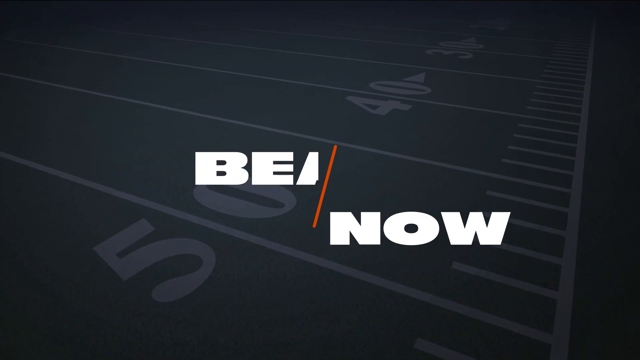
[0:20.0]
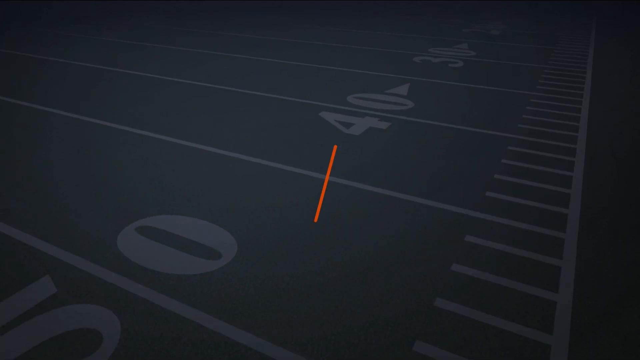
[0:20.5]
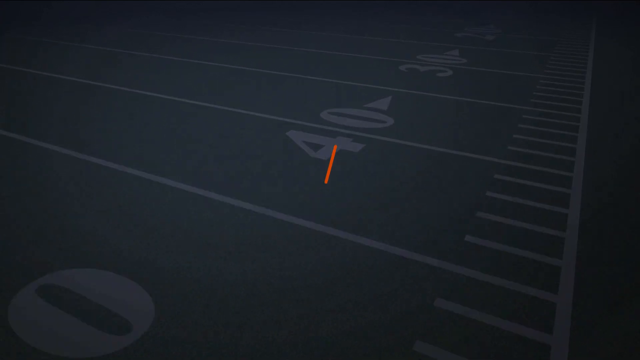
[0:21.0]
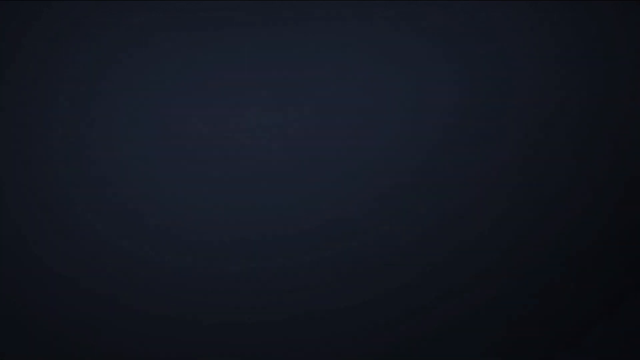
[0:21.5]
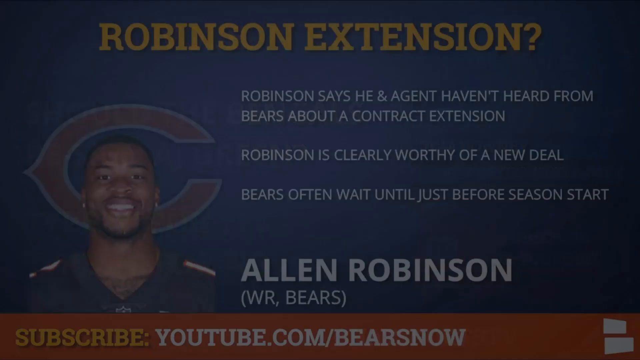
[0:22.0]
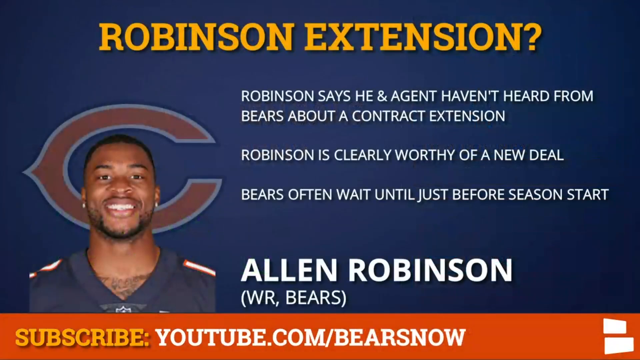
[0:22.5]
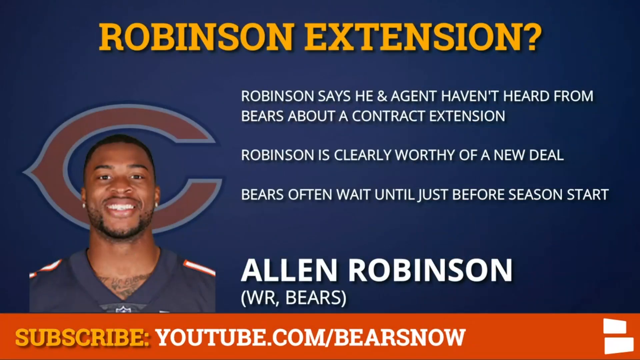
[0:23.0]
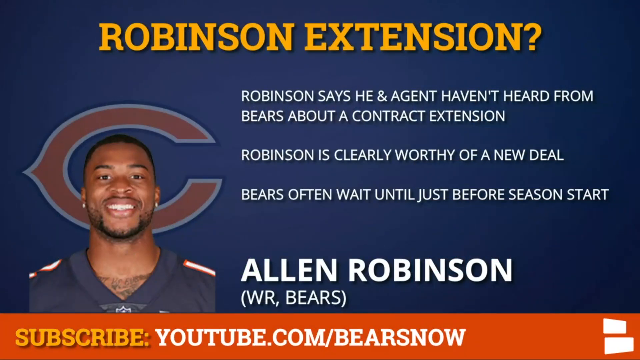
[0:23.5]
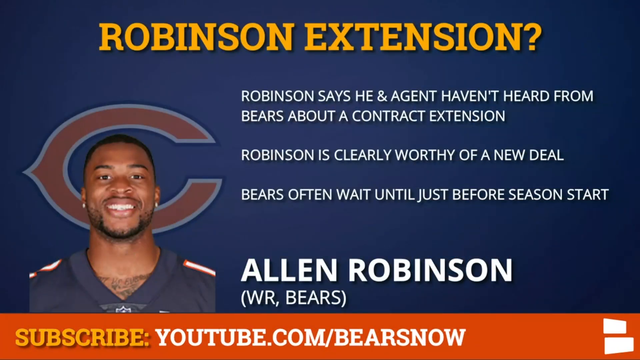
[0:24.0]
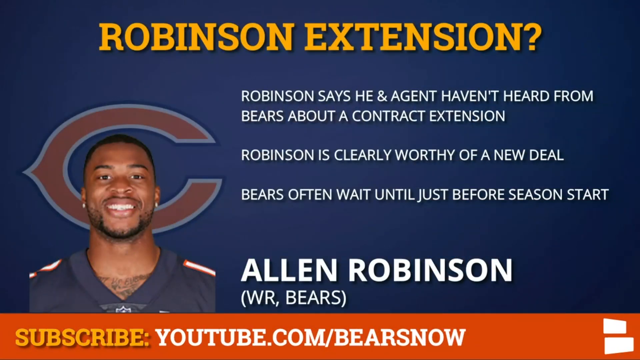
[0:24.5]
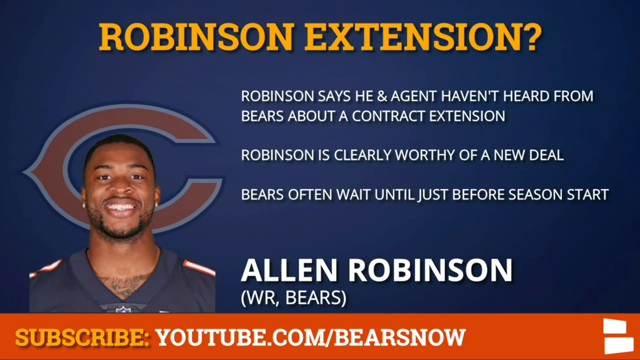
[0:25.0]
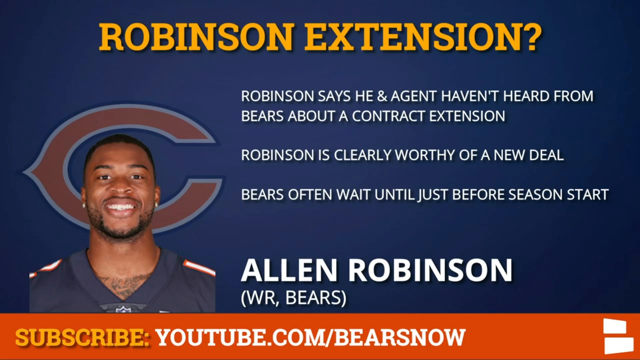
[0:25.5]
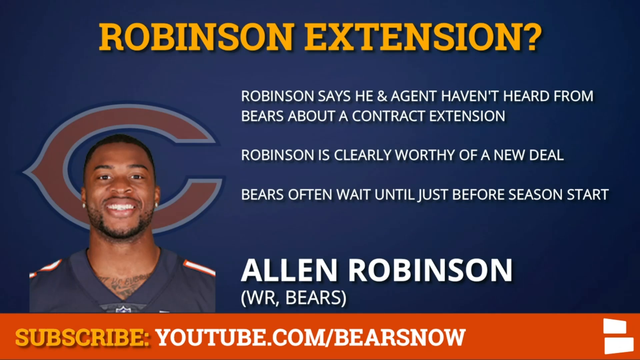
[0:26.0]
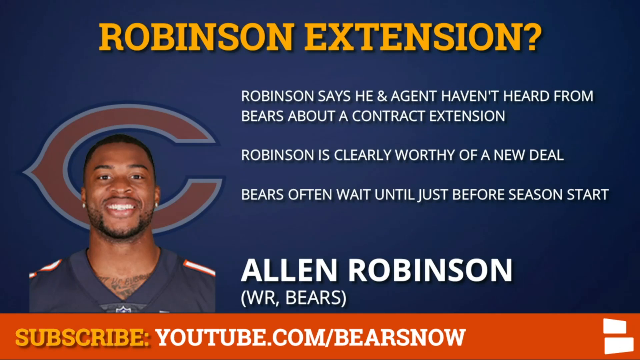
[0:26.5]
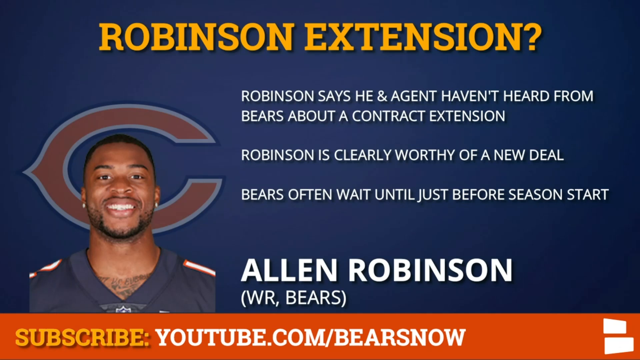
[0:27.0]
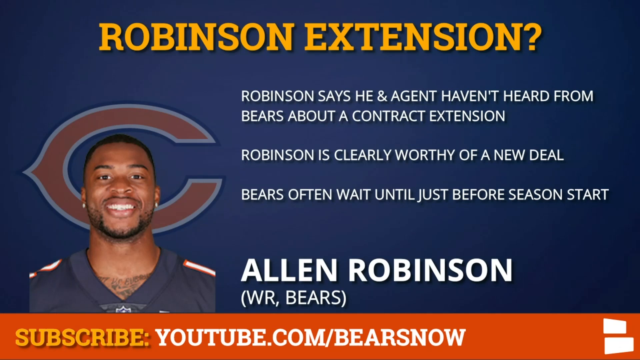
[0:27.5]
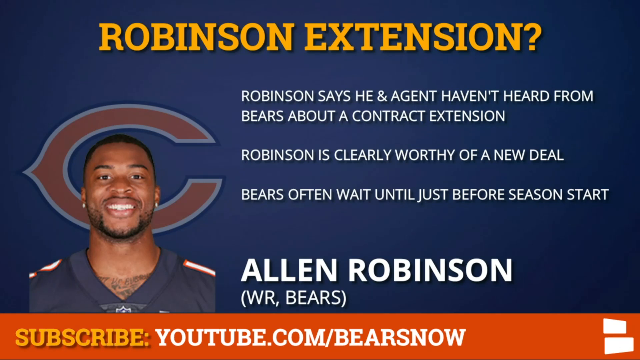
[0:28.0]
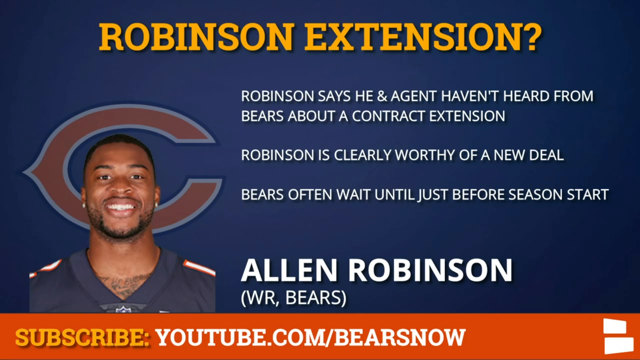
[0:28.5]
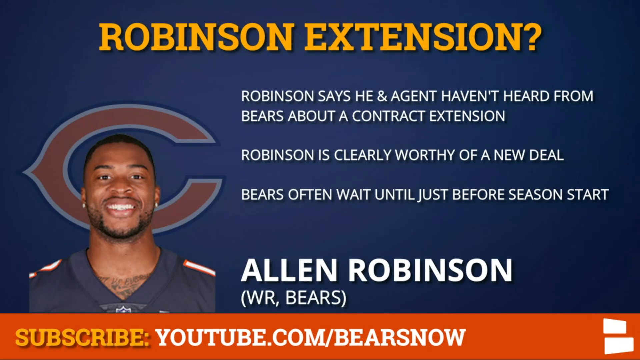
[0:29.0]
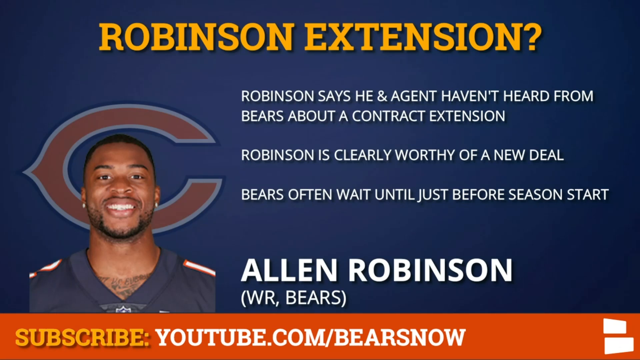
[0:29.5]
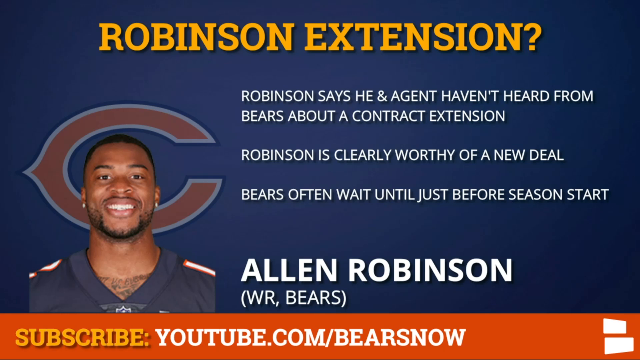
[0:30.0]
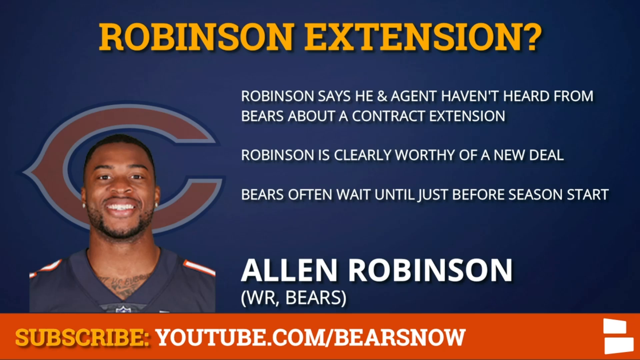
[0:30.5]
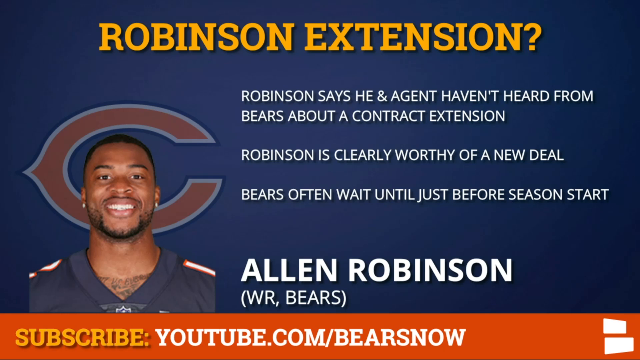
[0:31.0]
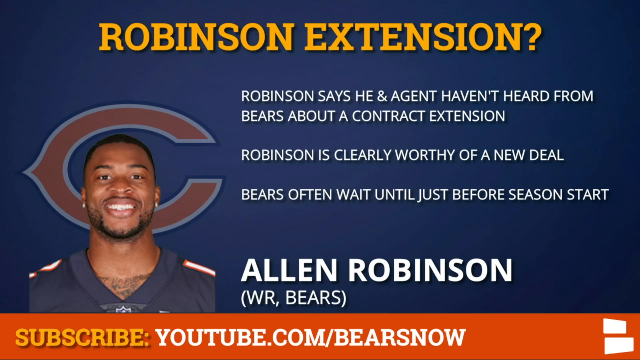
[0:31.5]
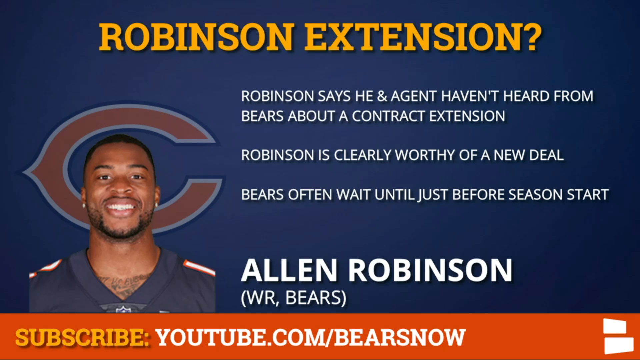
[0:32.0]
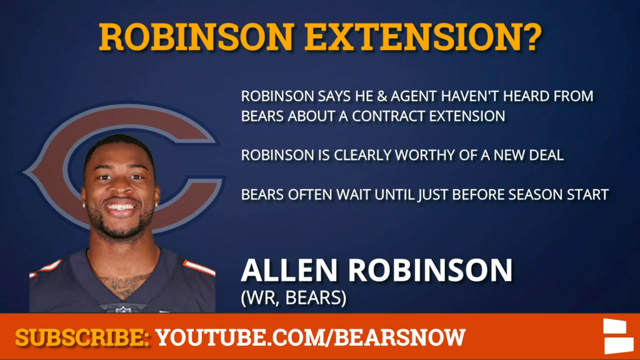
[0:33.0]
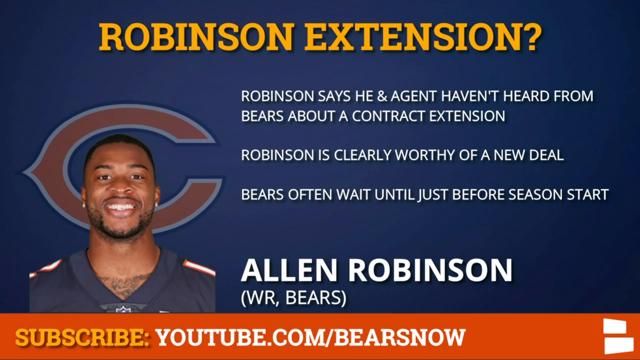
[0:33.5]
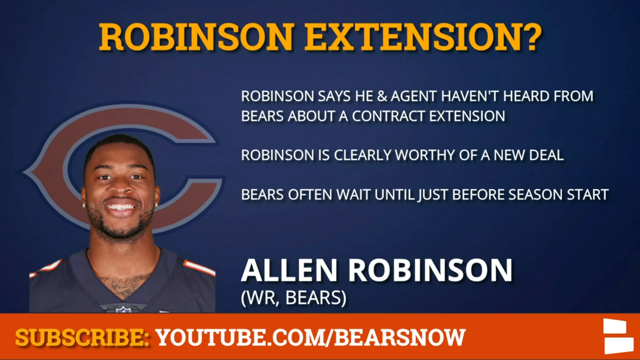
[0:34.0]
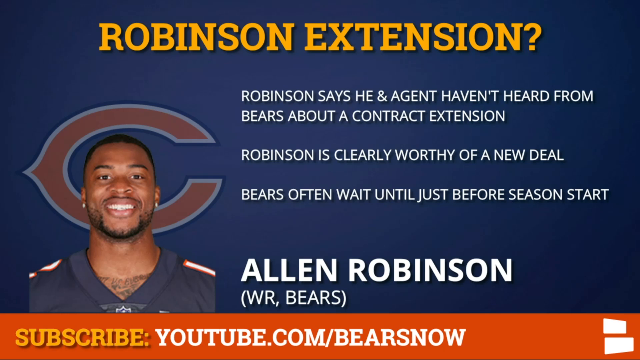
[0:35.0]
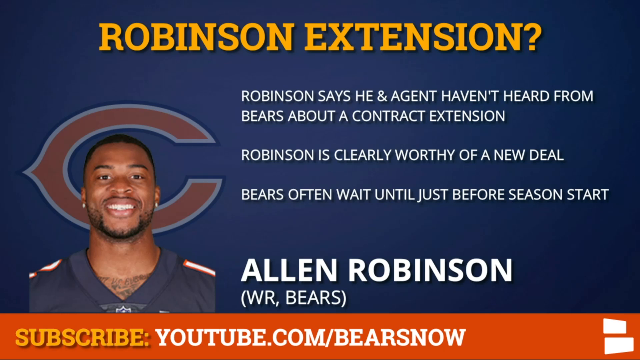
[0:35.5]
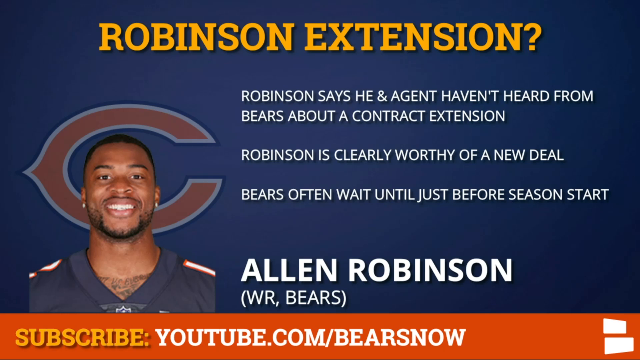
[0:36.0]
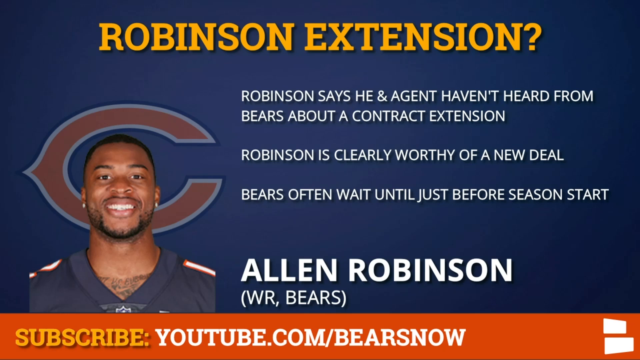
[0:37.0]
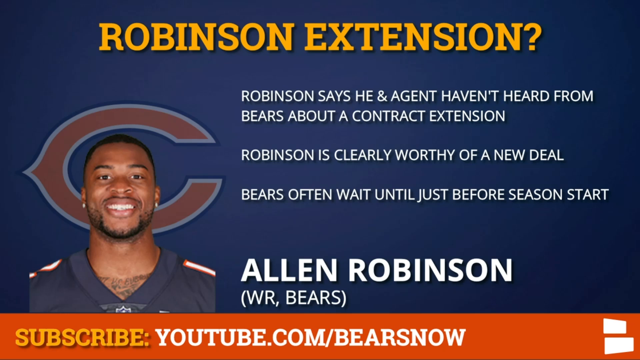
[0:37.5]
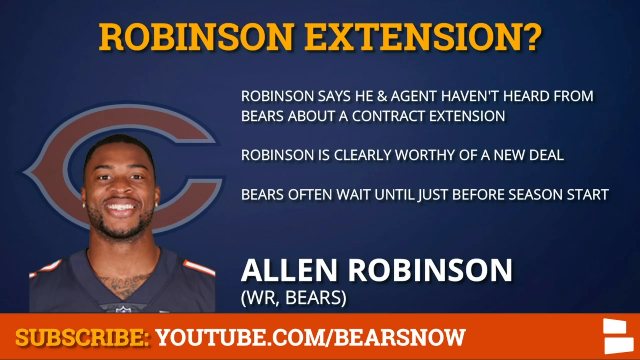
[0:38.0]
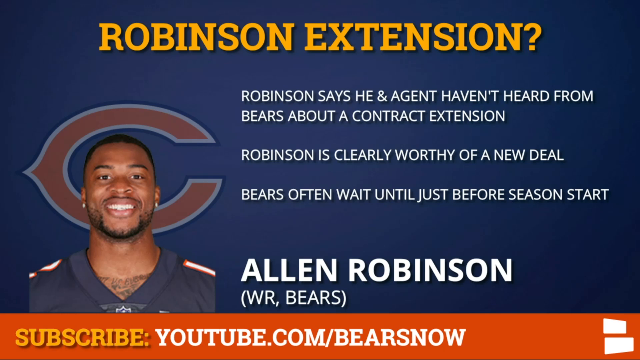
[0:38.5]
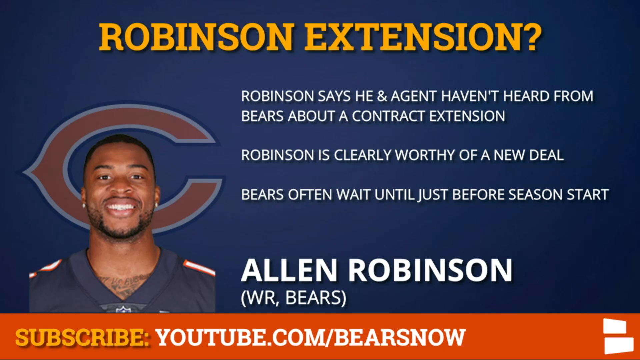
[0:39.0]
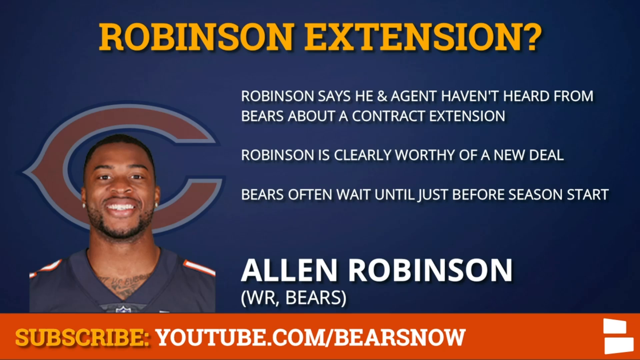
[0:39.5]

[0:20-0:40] A football field is shown, and the Bears Now logo reads "BEA", with half of the A, and then "NOW". As the camera continues down the field, the logo gets absorbed and sucked into the middle of the page. The video moves to a page about a player, headed "Robinson extension," with the text "Robinson says he and his agent haven't heard from bears about a contract extension" followed by a little more about the player. The player is a Black man who poses for his picture smiling broadly with his chin up; he wears two earrings and his jersey. There is a big C behind his picture. At the bottom his name, Alan Robinson, is given along with the Chicago Bears, and "subscribe" and "YouTube.com/bears now" appear on the bottom.